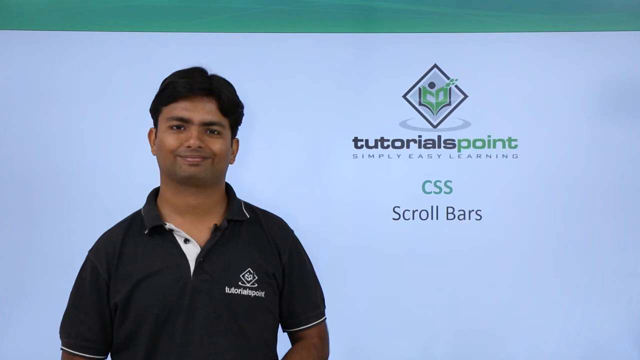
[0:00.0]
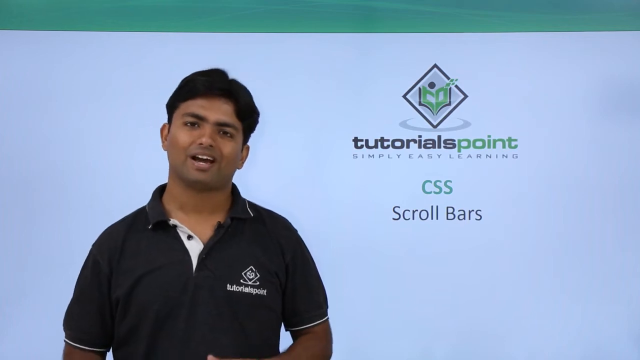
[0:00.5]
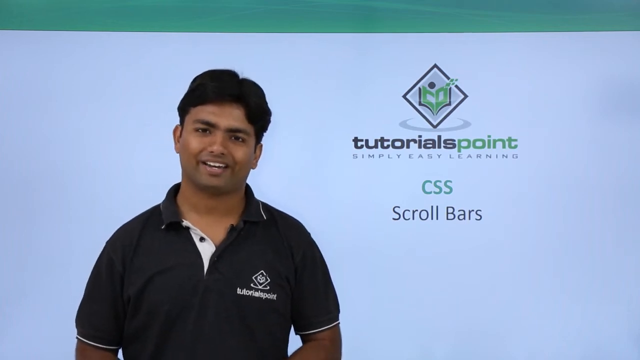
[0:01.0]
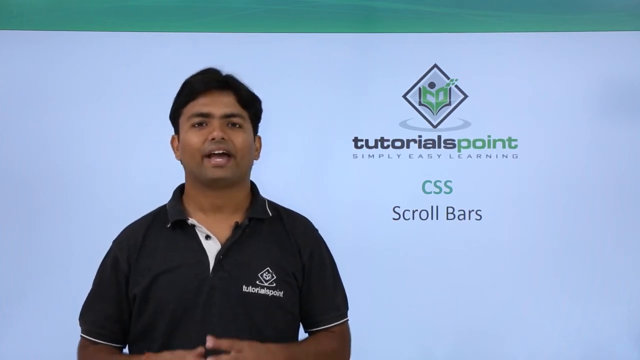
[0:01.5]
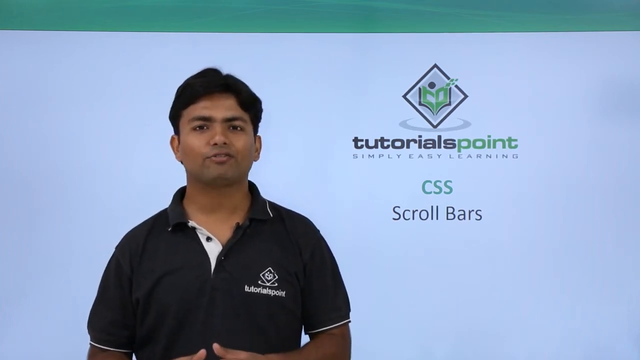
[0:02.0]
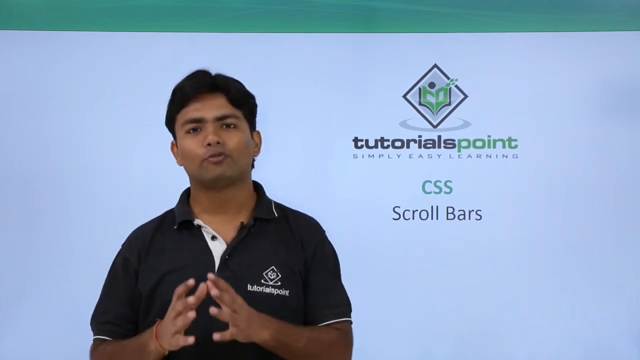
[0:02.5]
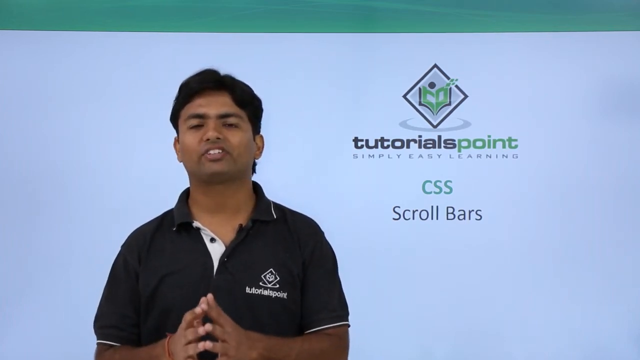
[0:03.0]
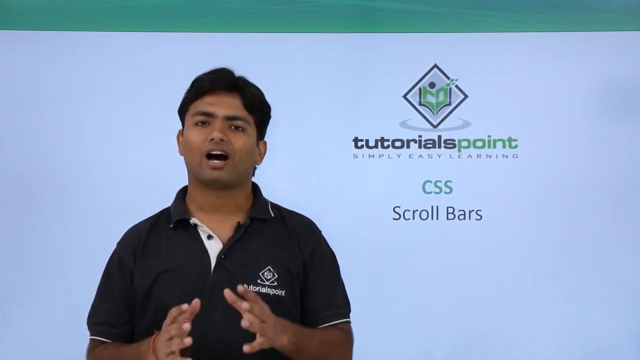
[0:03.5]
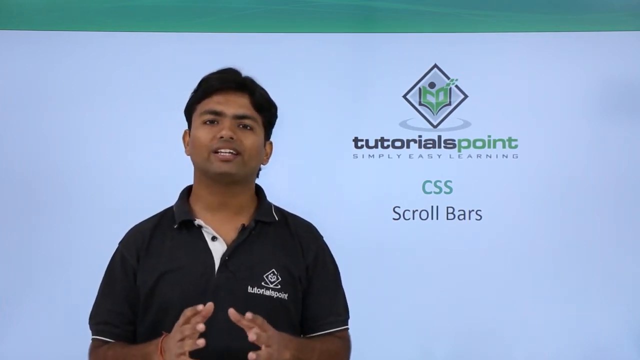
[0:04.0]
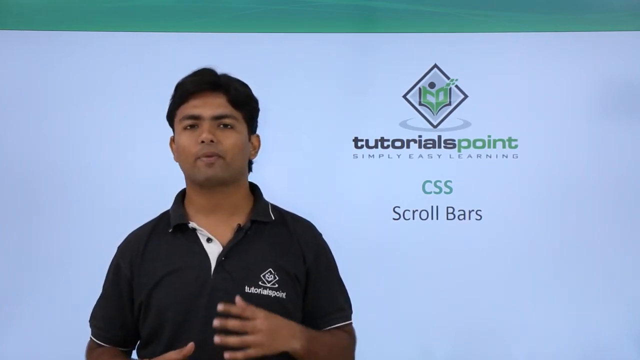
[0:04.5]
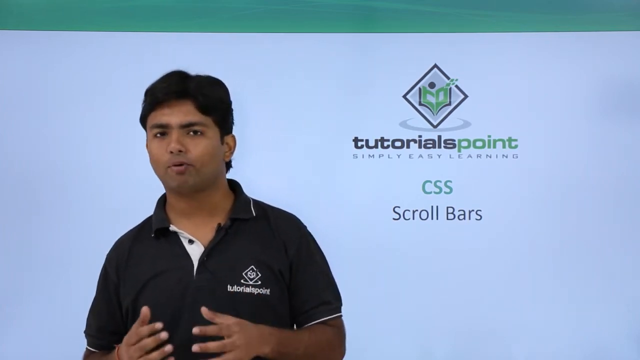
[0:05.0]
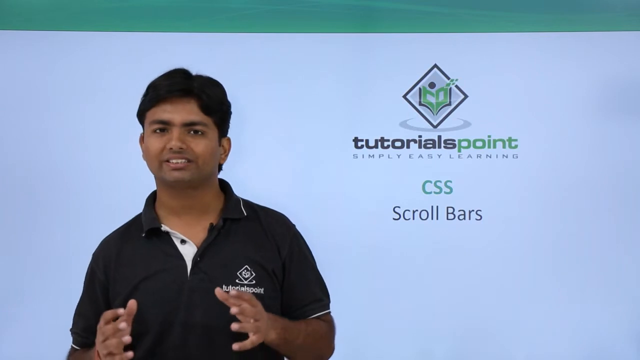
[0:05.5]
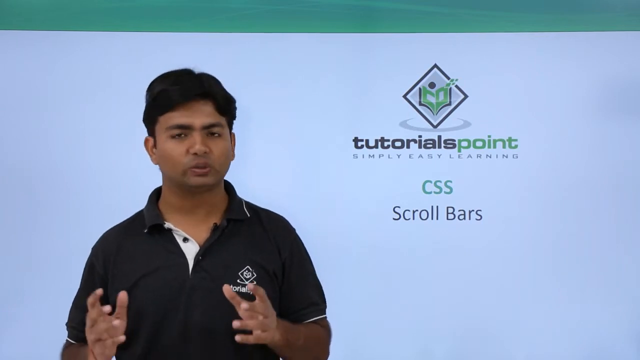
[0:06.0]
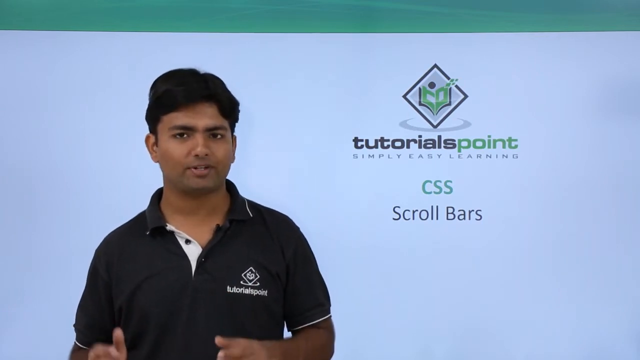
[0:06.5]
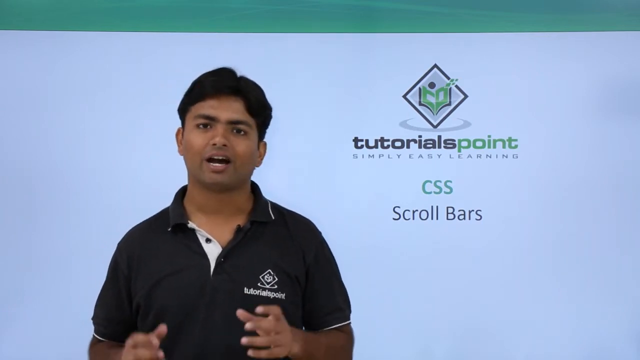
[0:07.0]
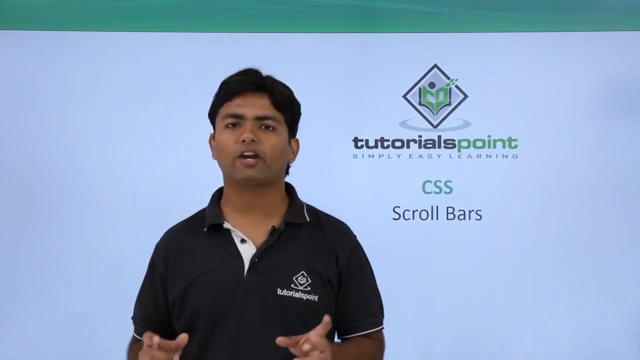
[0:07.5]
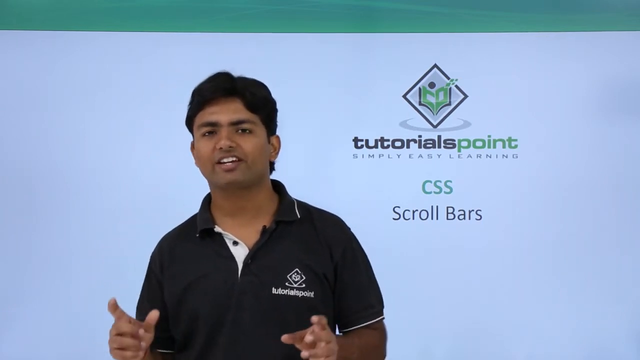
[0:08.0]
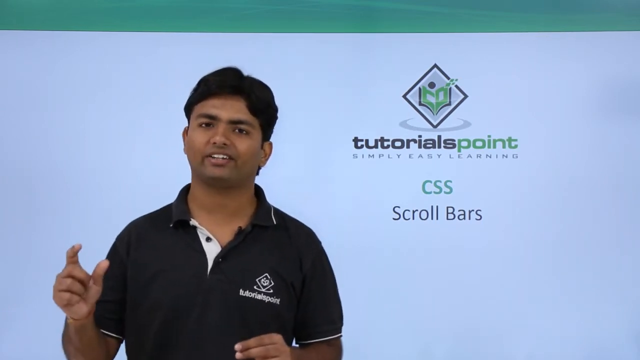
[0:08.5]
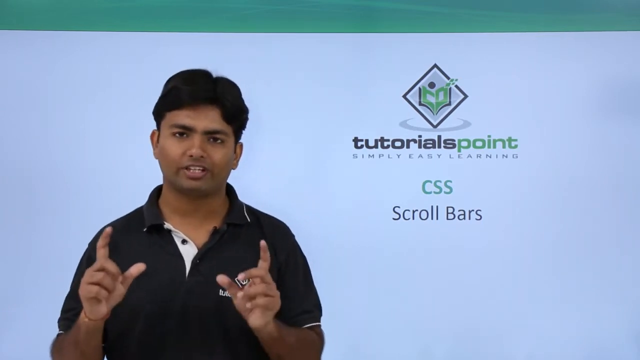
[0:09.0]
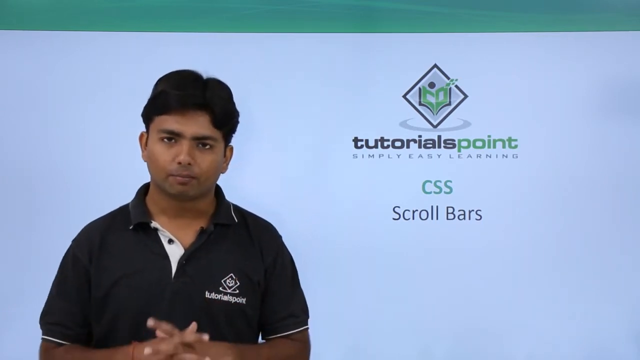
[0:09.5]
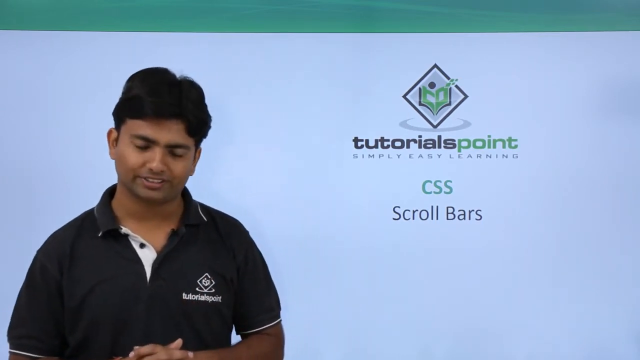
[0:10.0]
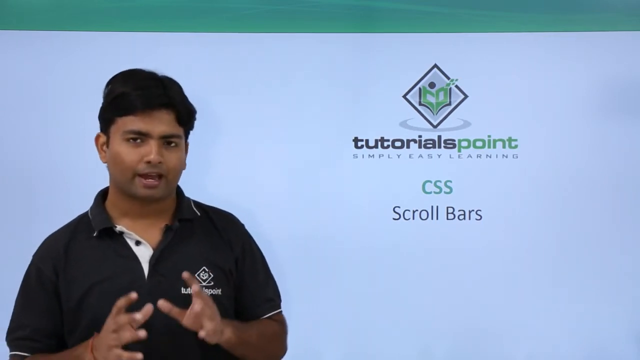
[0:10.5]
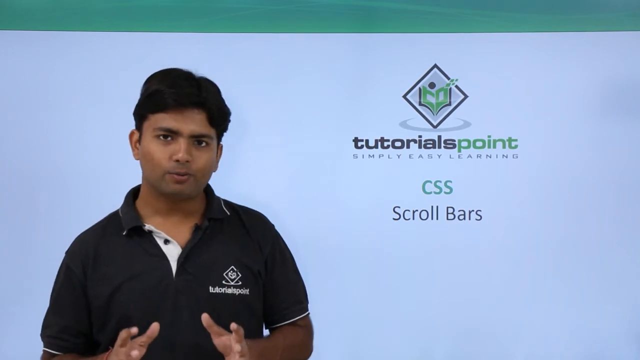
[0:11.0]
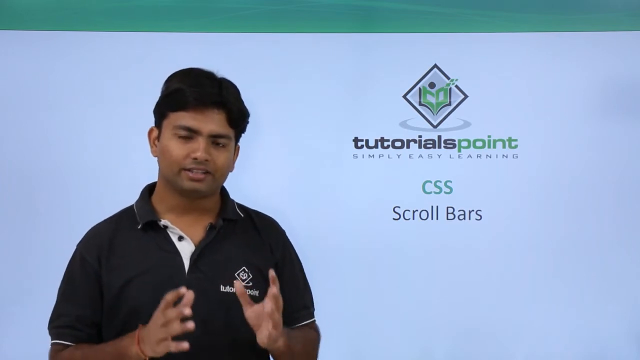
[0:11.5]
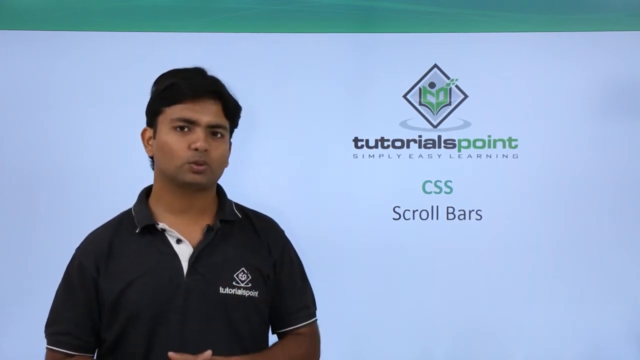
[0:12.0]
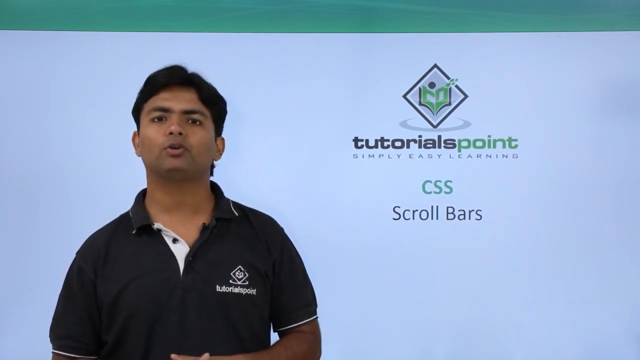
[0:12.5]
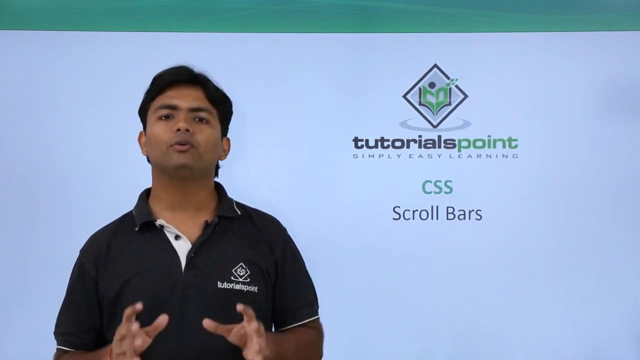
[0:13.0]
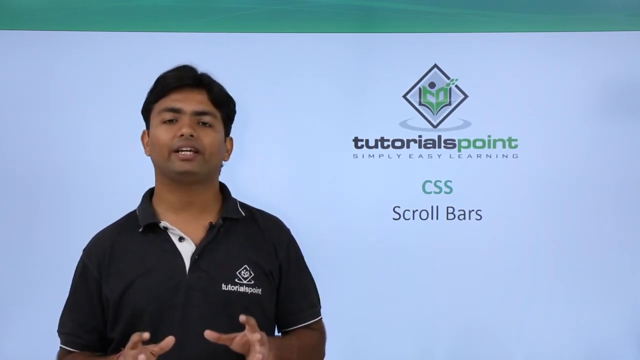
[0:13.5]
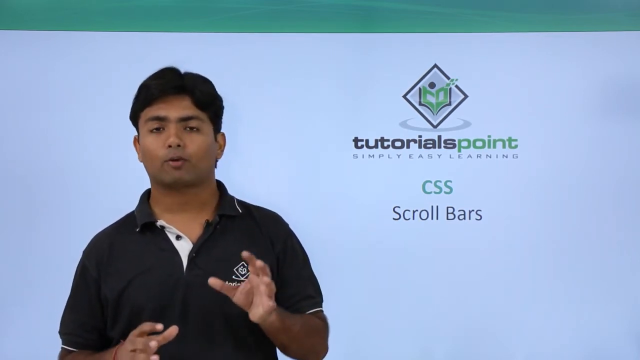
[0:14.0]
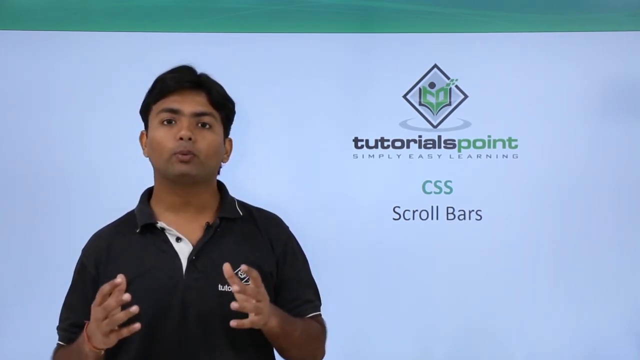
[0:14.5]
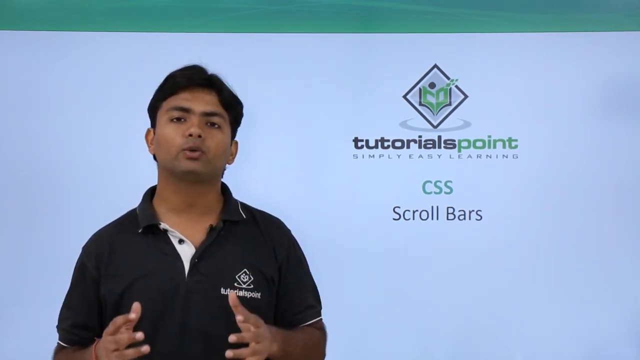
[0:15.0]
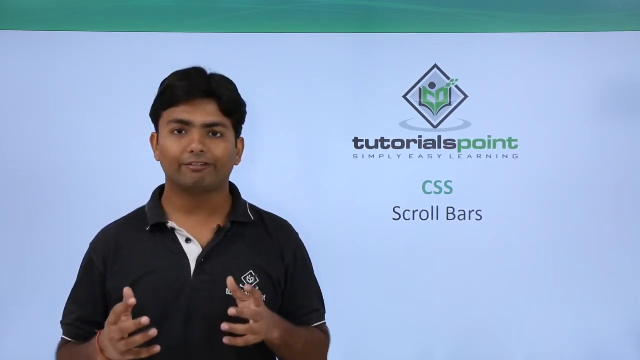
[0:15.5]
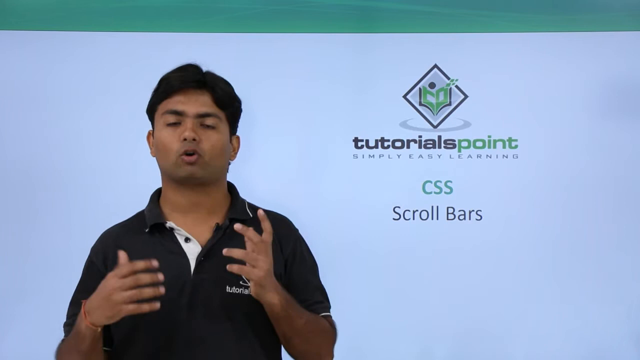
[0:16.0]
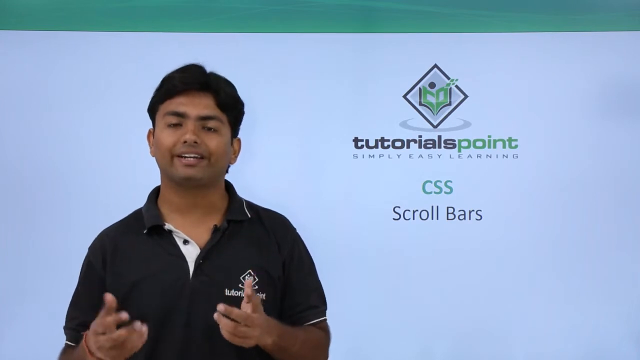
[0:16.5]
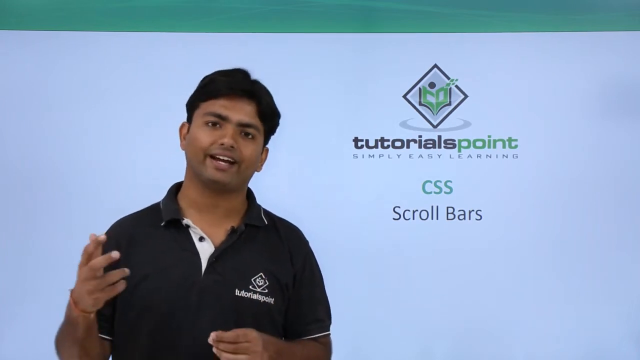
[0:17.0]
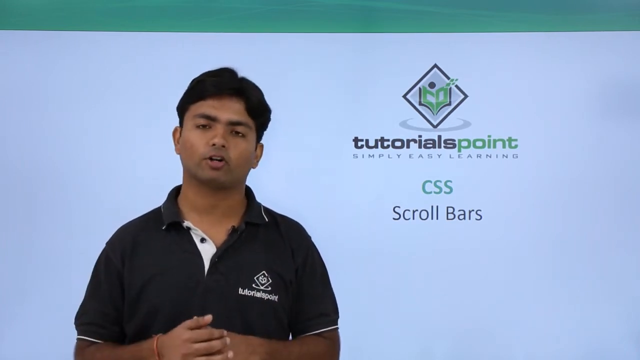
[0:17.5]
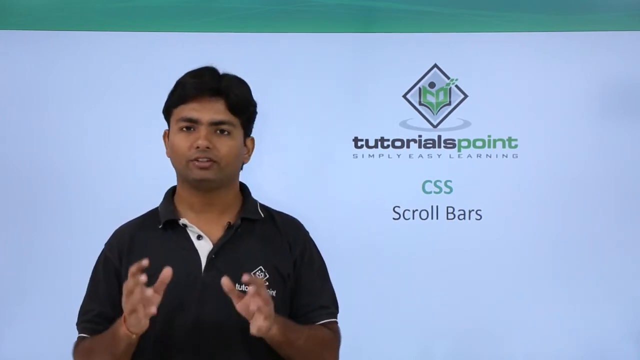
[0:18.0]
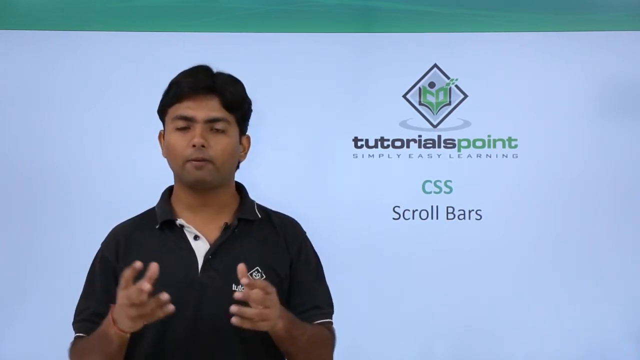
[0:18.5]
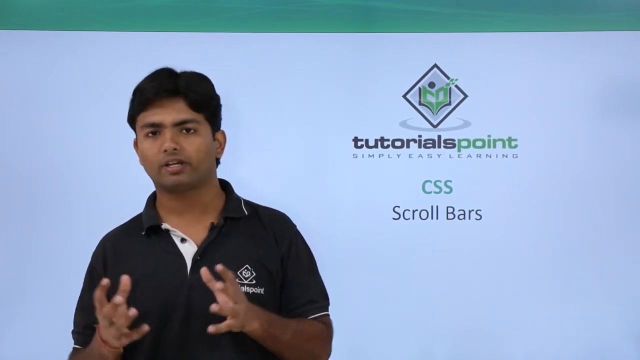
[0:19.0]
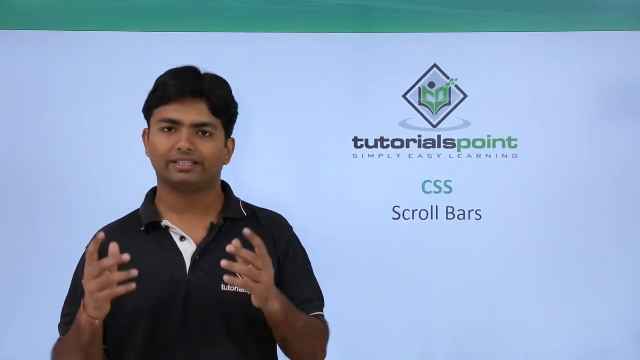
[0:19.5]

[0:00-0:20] A young man who looks to be of Indian descent stands in front of a white screen. He wears a black short-sleeve polo shirt with the TutorialsPoint logo on his left chest. On the right side of the screen, on the white background, is the TutorialsPoint logo: a diamond shape with a gray background and a green book inside, with a black circle behind the book that looks like someone's head reading the book. Underneath it says "tutorials" in black letters and "point" in green letters. Below that, in small black letters, it says "simply easy learning". Beneath that is "CSS" in green letters, and under that "scroll bars" in black letters. The man speaks to the camera and is seen from the chest up.